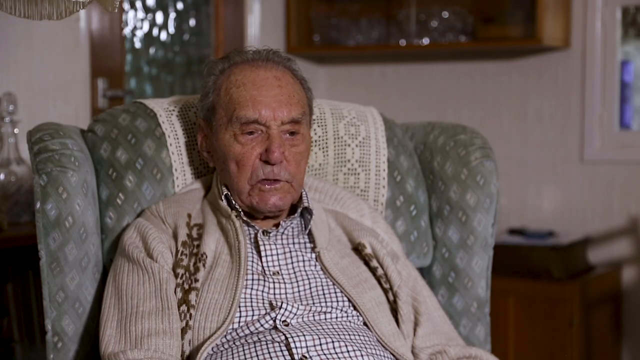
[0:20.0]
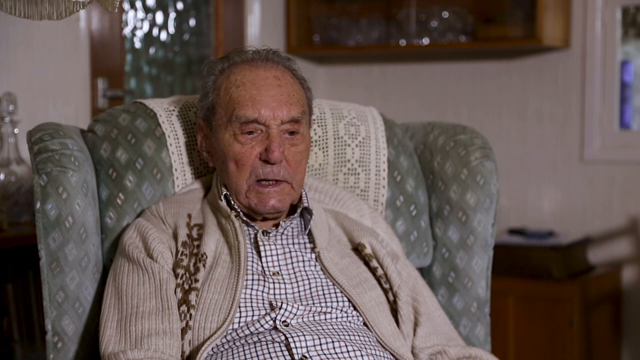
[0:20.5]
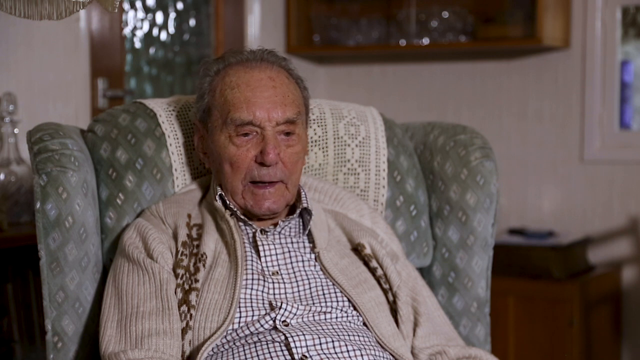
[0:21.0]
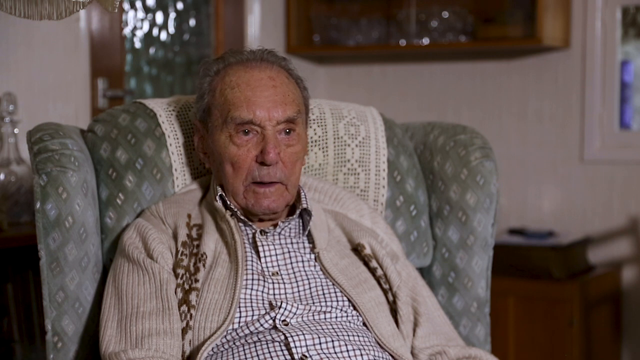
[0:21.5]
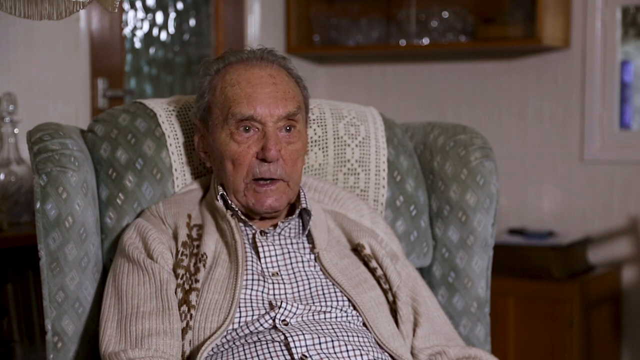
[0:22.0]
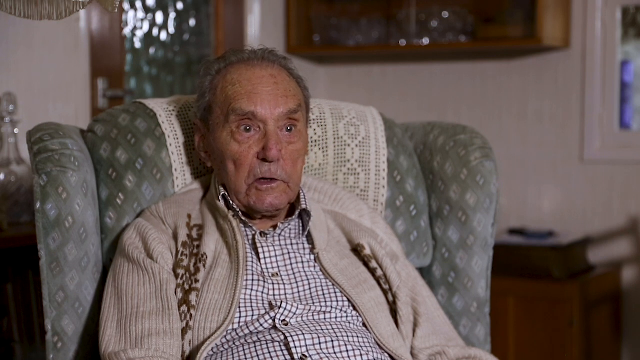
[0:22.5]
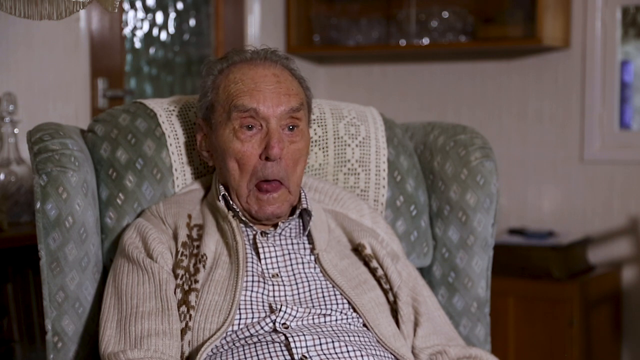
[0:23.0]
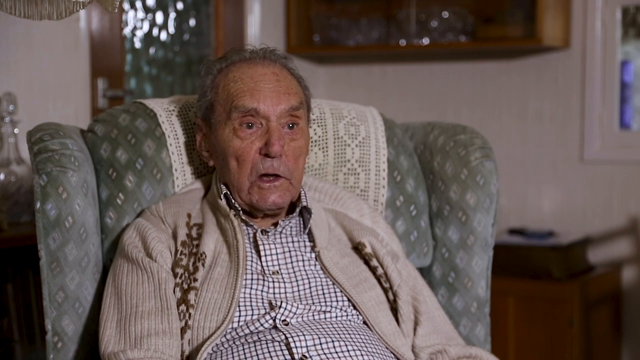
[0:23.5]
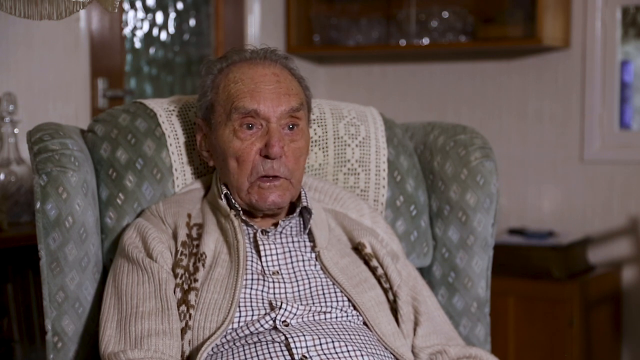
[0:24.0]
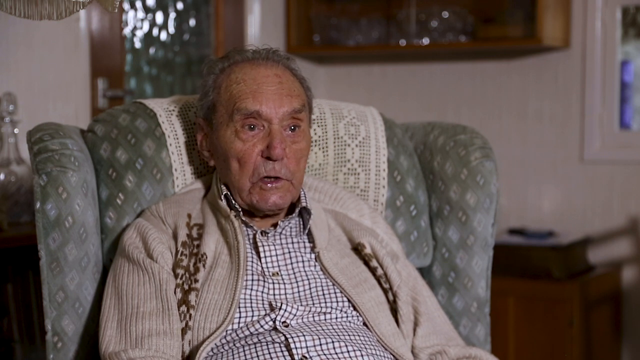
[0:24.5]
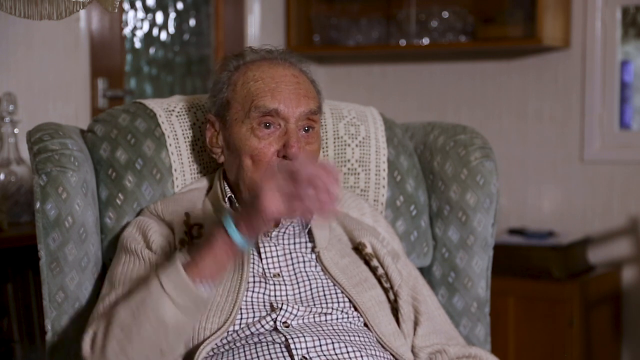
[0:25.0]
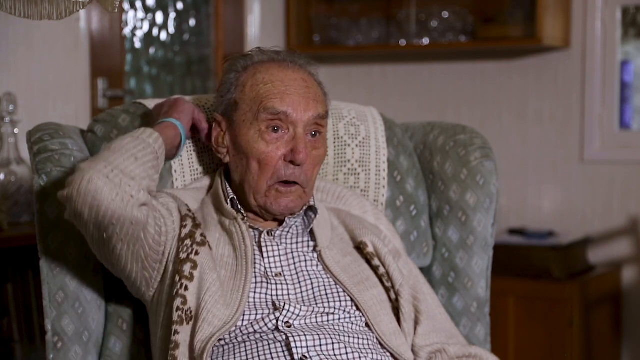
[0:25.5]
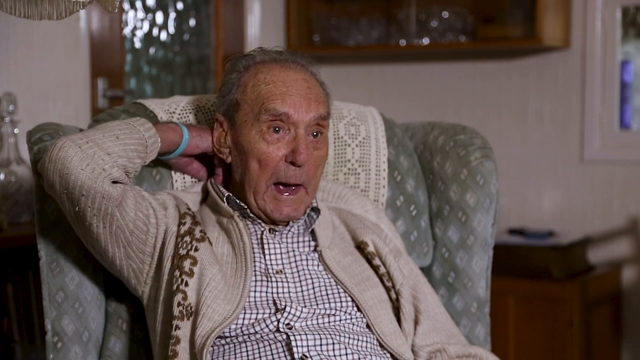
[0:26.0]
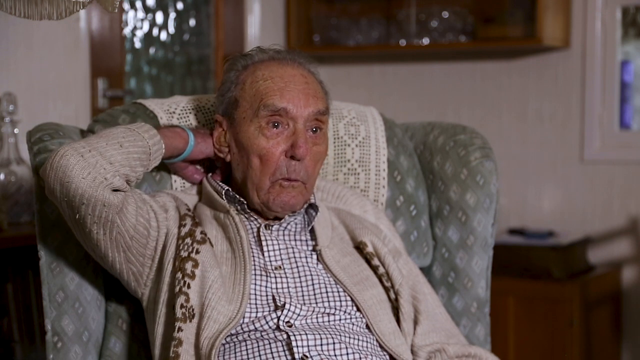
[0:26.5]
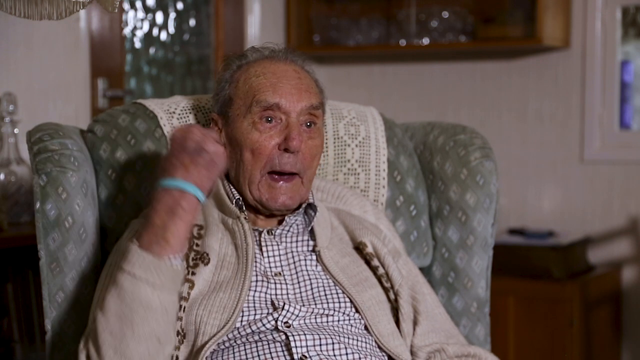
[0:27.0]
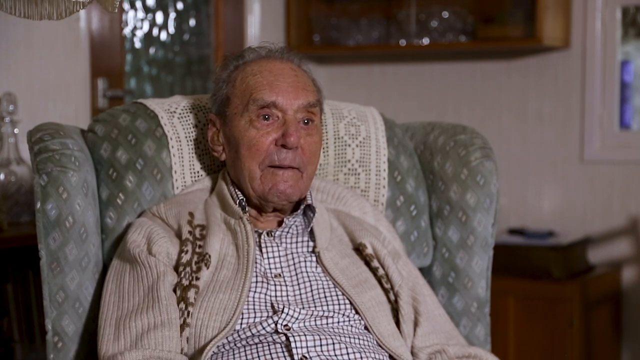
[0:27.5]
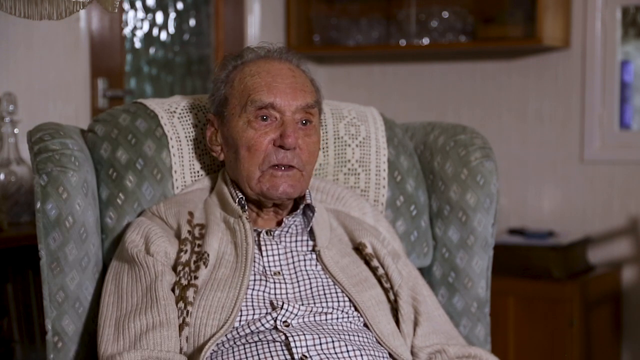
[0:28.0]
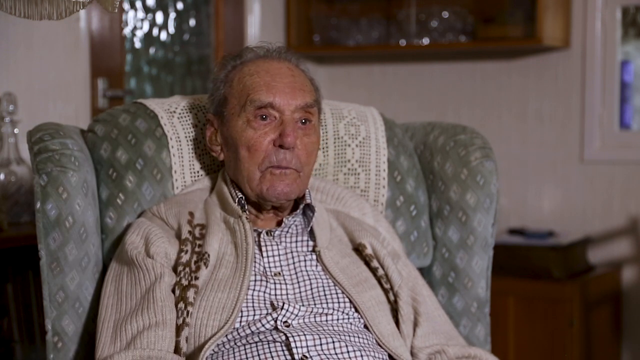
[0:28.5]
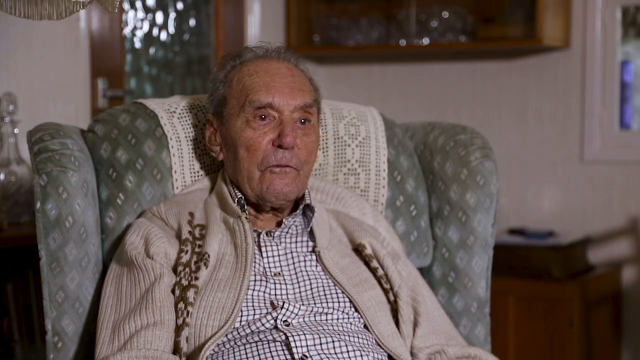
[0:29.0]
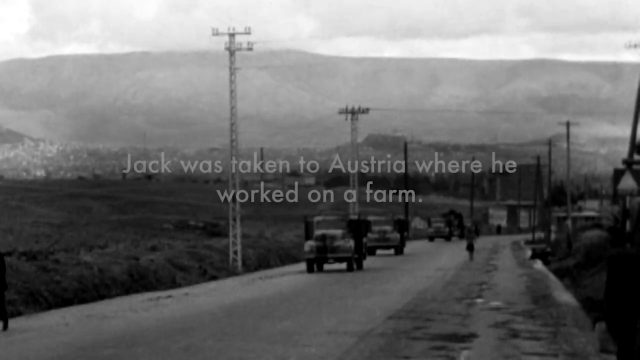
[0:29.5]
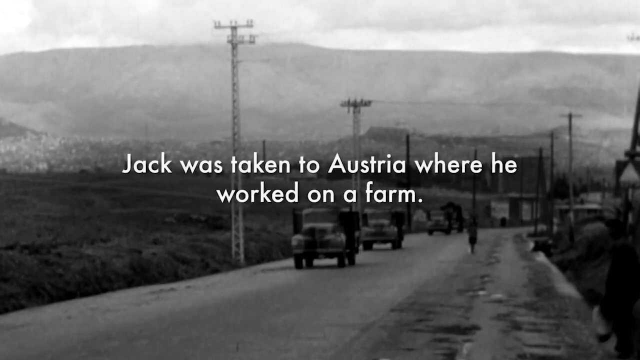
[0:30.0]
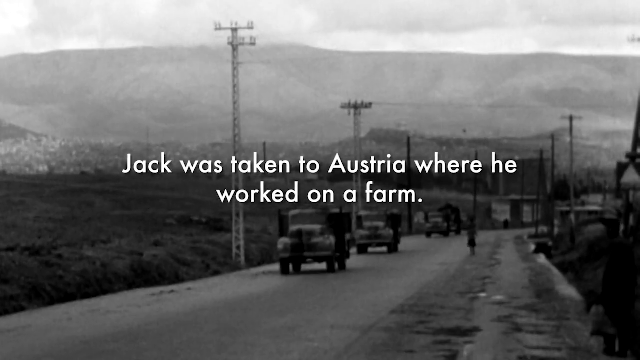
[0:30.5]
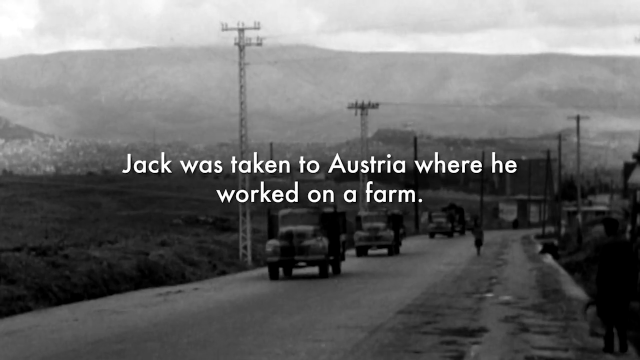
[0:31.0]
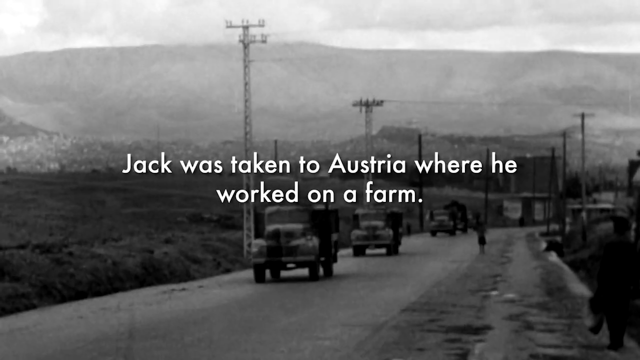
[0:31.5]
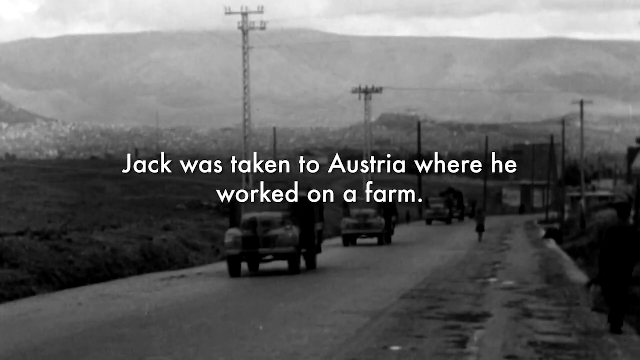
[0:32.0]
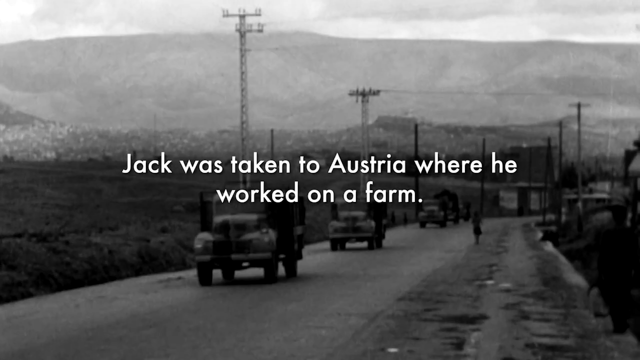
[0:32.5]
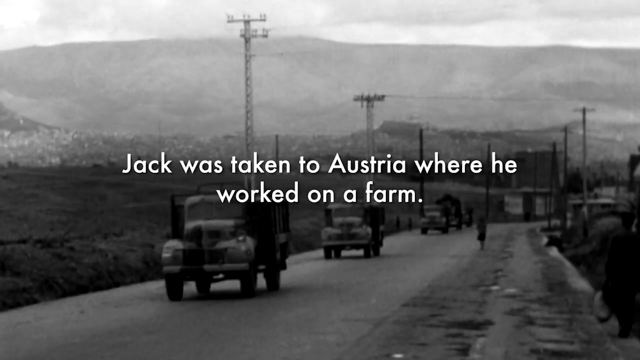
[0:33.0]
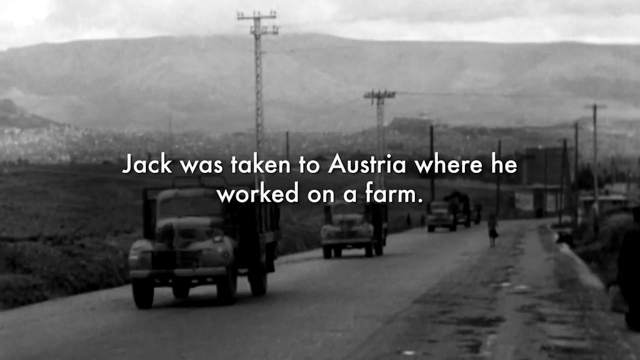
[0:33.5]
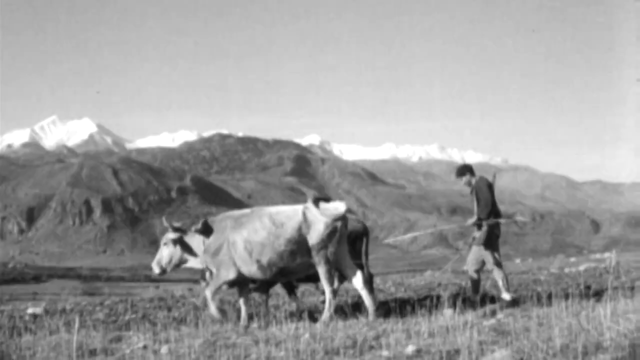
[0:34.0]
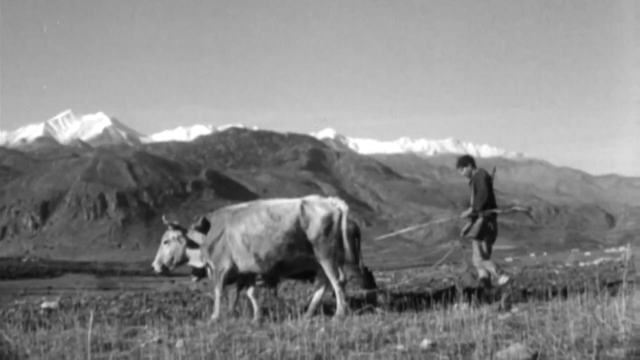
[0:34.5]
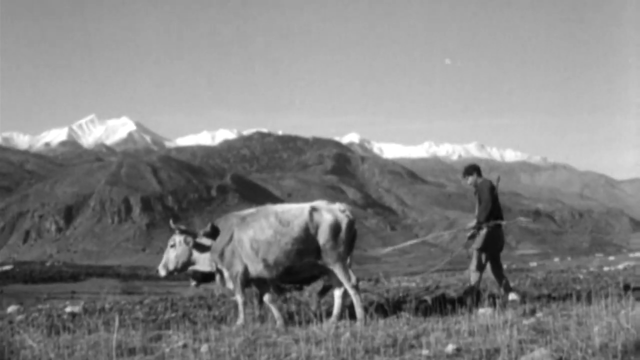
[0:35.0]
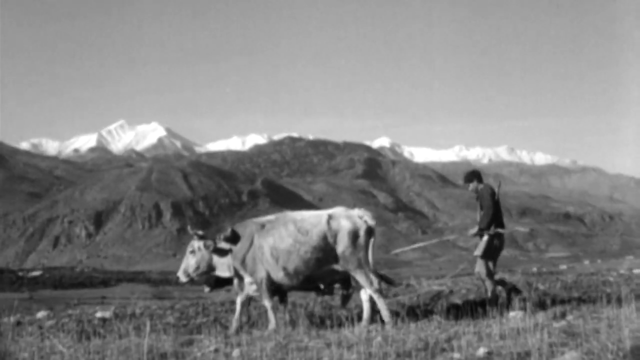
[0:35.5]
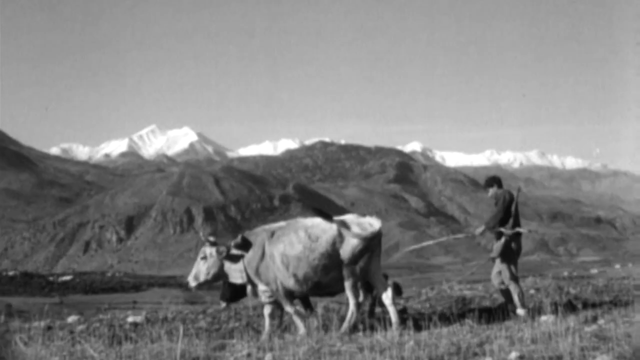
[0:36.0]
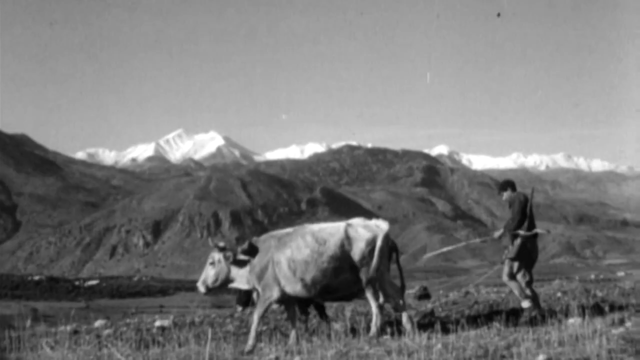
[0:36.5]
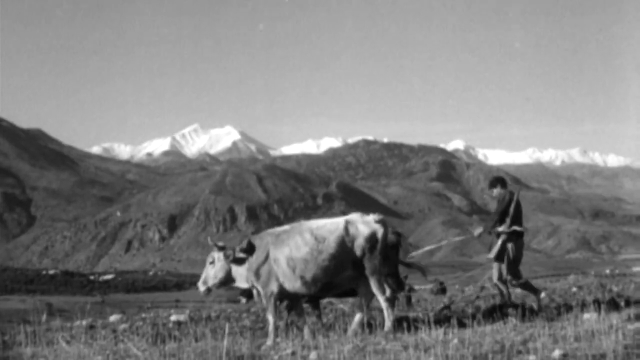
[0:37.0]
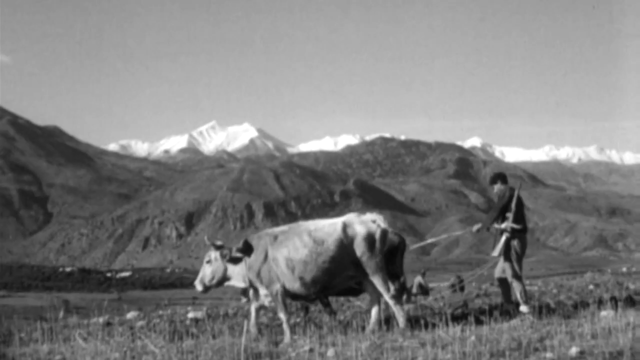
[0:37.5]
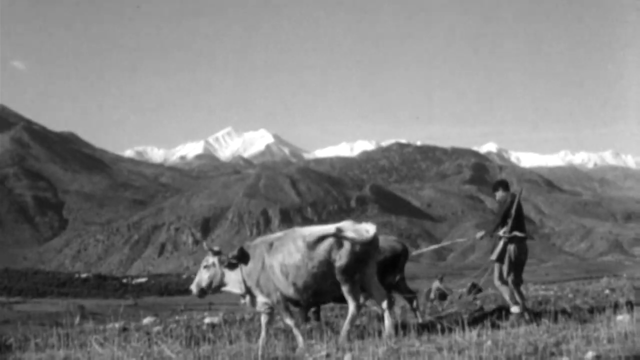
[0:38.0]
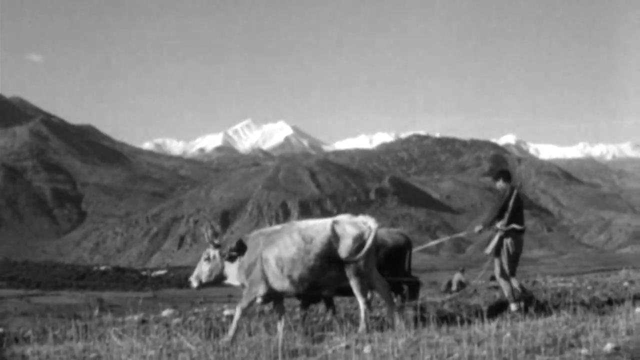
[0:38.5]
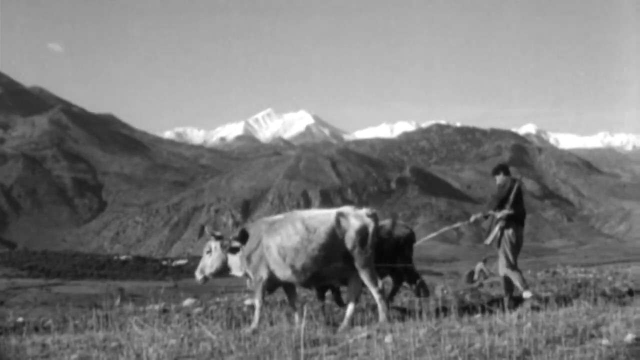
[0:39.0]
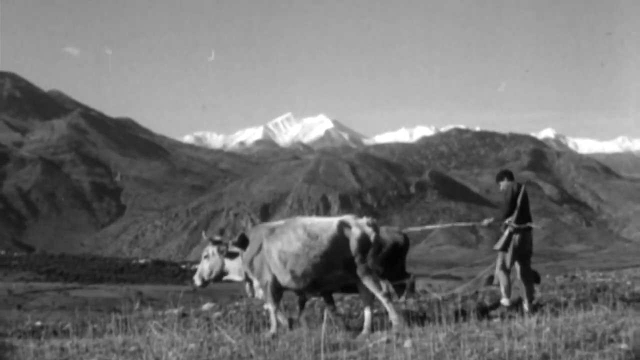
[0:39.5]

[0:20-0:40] A Caucasian man is seated in a gray patterned armchair, speaking. He wears a check shirt under a tan sweater with brown decor on each side of the lapel. He reaches behind him and scratches behind his ear. Text then reads "Jack was taken to Austria where he worked on a farm." A picture shows a few trucks going down a highway; a mountainside and telephone poles are at the very top, and the roadway runs straight to the right of the frame and then curves to the right. The trucks roll down the roadway. Next, a young man with a stick herds a cow; behind them is a mountainside that looks like it has ice on it. The man slowly herds the cow down some sort of plowed land.